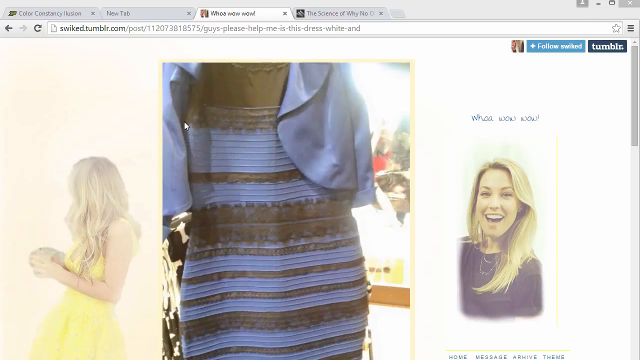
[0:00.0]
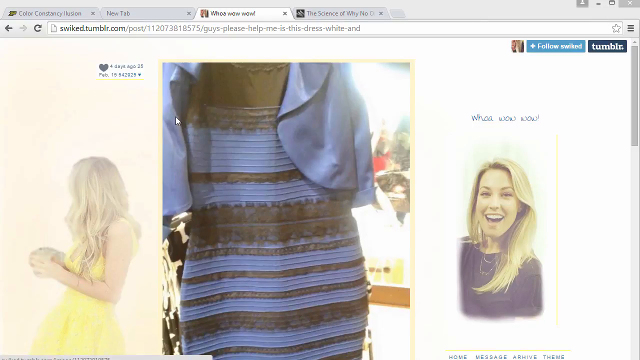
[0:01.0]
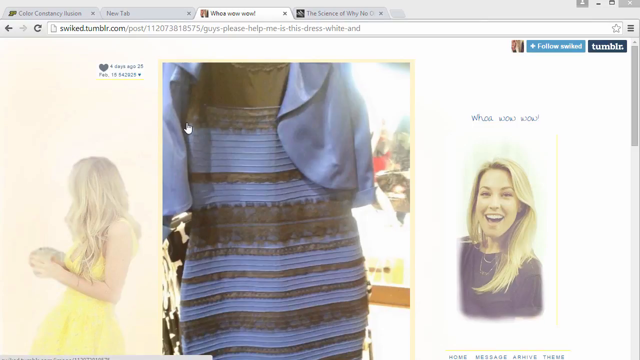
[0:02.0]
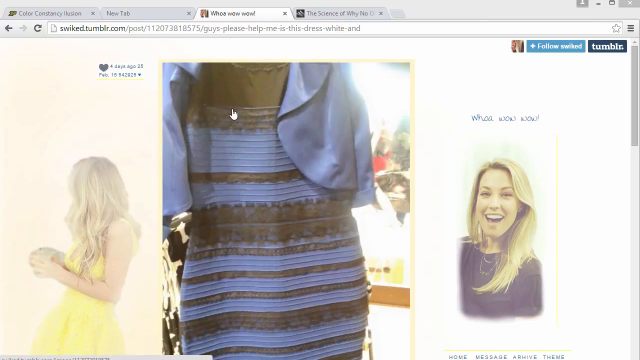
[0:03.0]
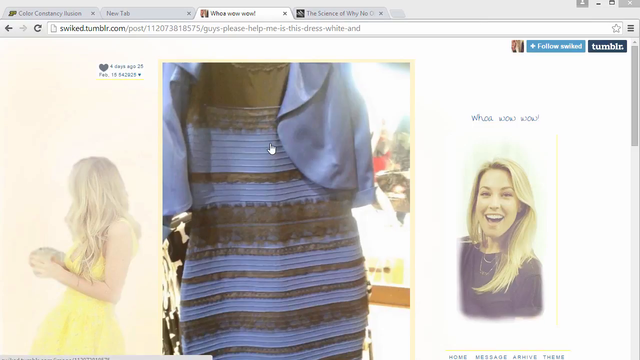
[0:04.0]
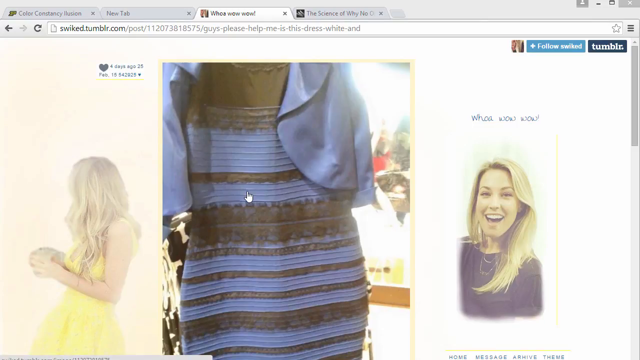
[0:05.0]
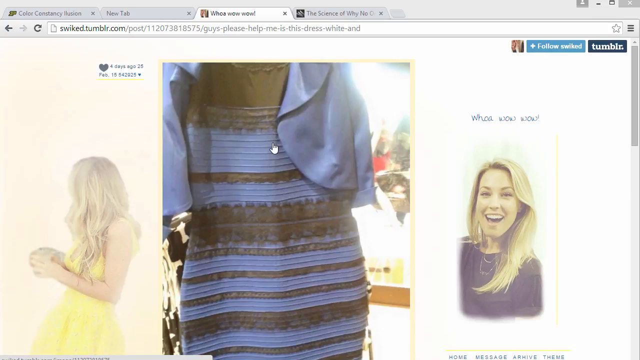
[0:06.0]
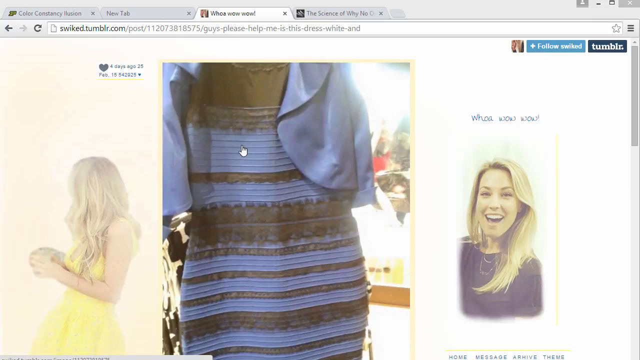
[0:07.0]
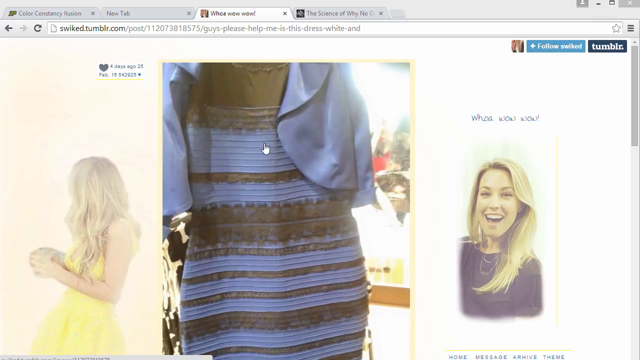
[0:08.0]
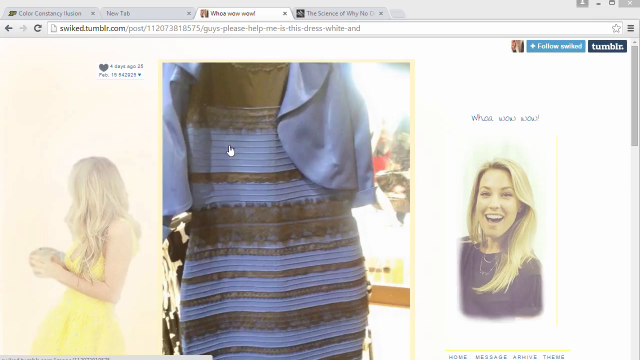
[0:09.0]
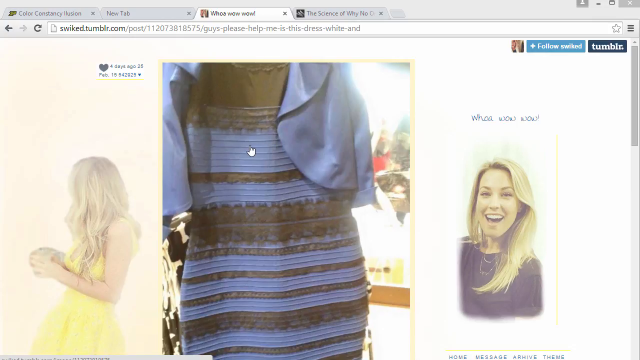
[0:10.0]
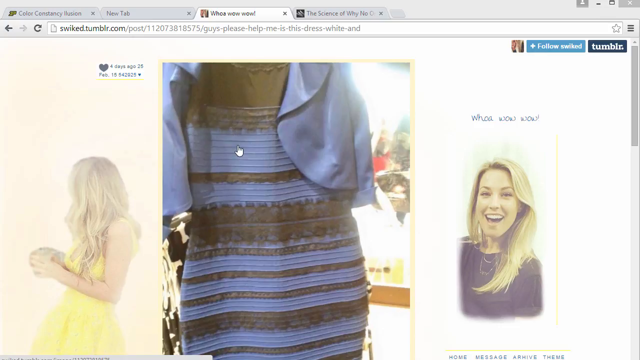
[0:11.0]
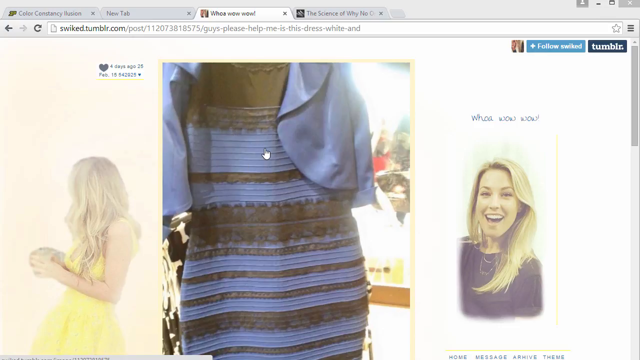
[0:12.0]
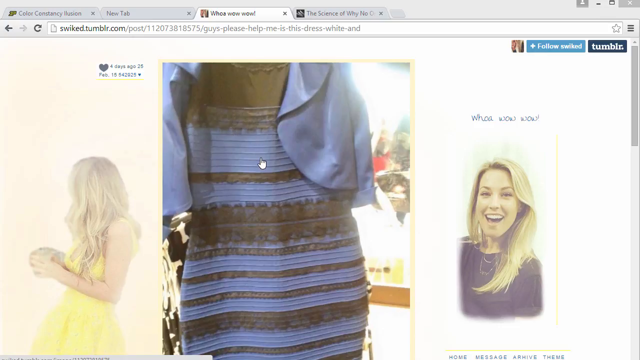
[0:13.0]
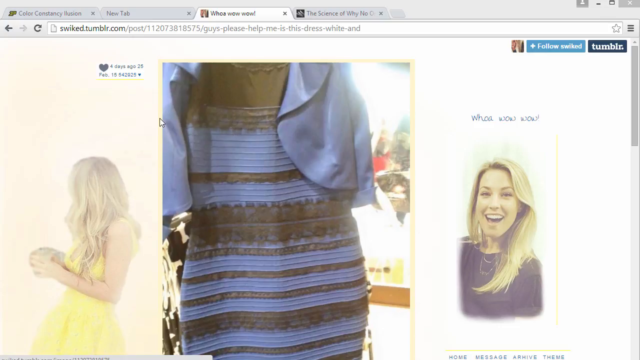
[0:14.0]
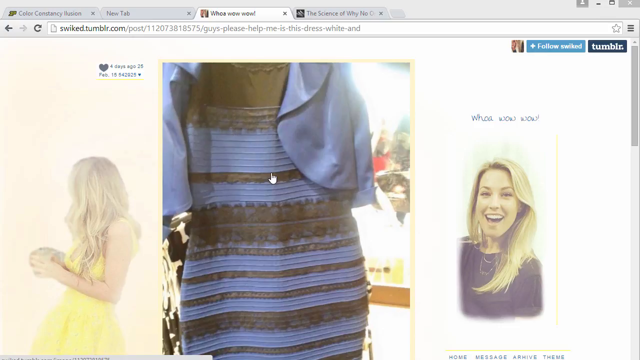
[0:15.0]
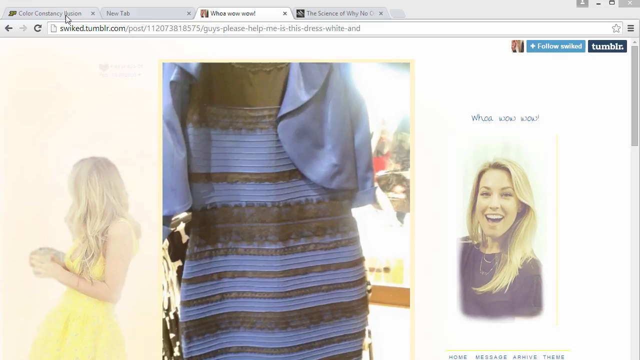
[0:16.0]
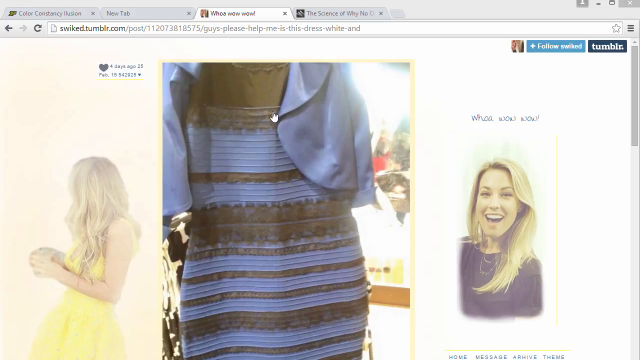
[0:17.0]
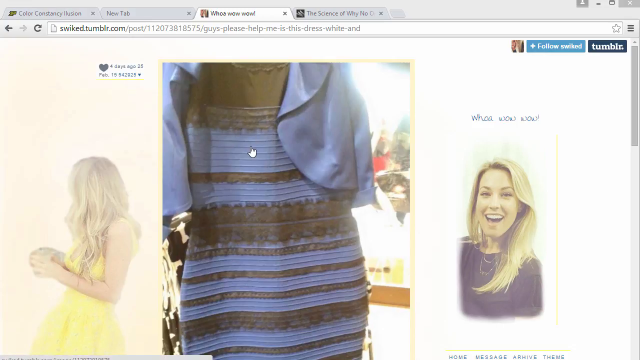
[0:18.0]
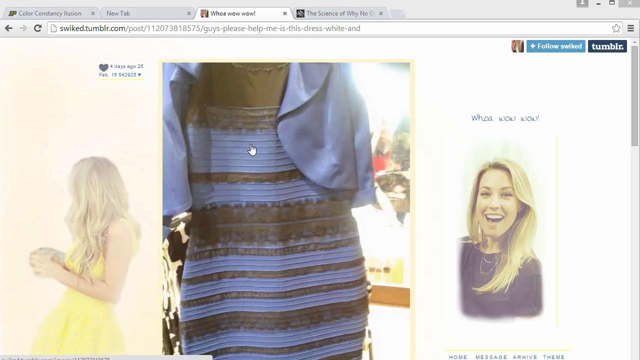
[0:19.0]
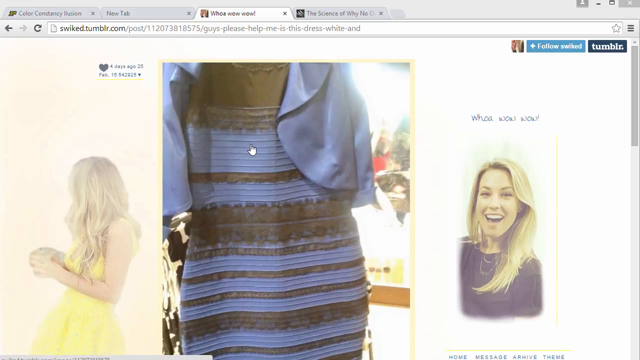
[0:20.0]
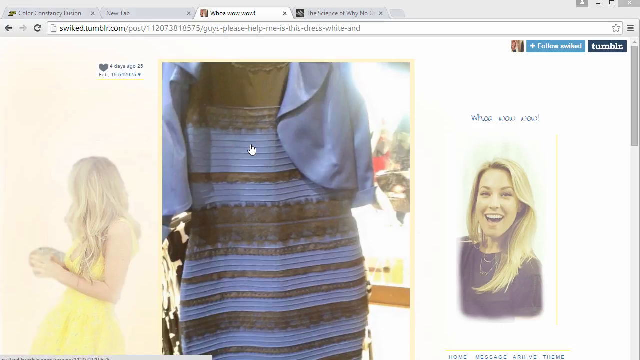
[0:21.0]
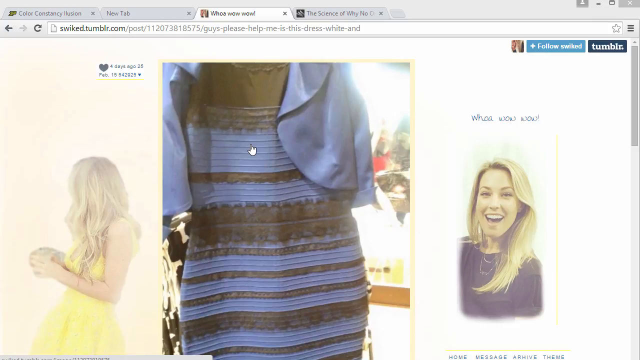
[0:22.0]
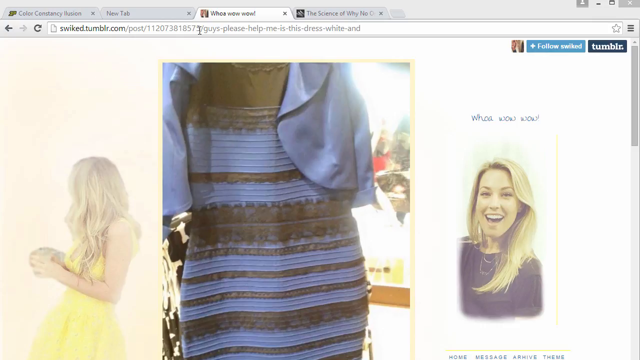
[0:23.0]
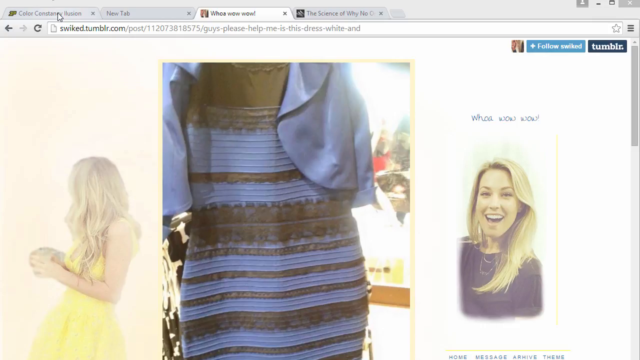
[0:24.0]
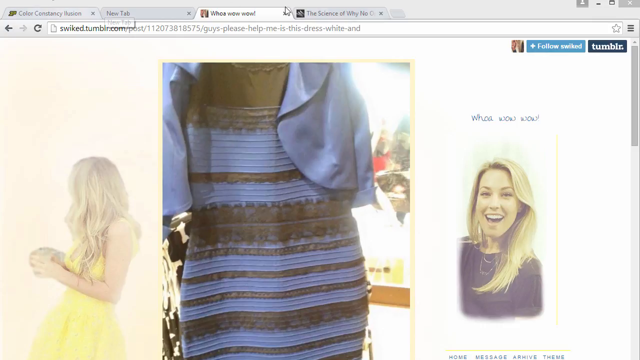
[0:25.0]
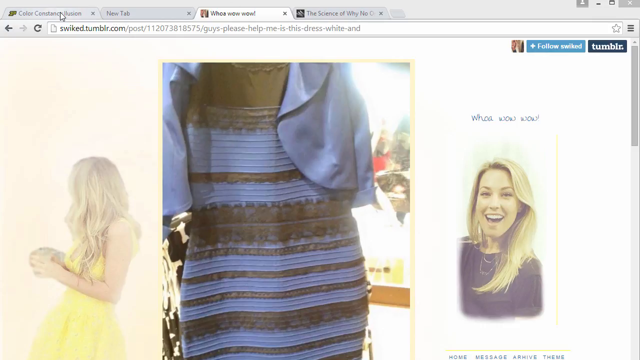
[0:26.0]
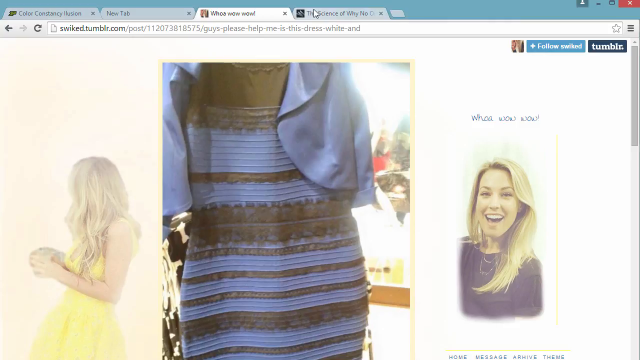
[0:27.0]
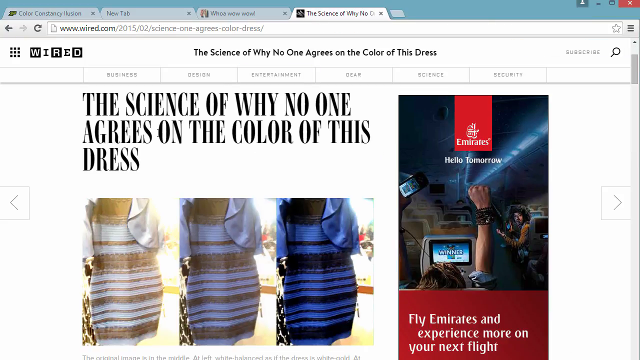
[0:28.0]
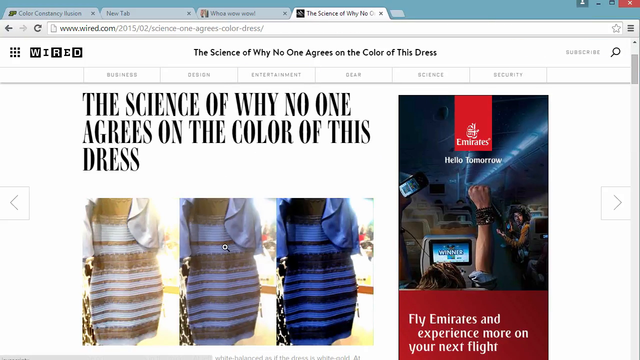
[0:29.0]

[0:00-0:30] A web browser is open with four tabs. The first goes to a color constancy illusion, the second is a new tab, the focused third tab is "whoa, wow, wow", and the fourth says "the science of why no", with more words that do not fit. The browser is grayscale apart from the websites' favicons. The page appears to be the Tumblr page for "whoa, wow, wow". Both sides of the background show an image of a blonde woman. On the left she looks away, wears a yellow dress and is possibly folding something; her blonde hair reaches elbow length. On the other side she looks at the camera and smiles with her mouth open, her top teeth visible and her bottom teeth not; she wears a black shirt and a couple of necklaces, and her straightened hair goes down past her shoulders. Above her it says "whoa, wow, wow". In the middle is the dress, which looks blue and black, though some may see it as white and gold. The cursor moves around and circles areas of the dress, such as the middle, where it is lightened by a different reflection of light. Over the dress the cursor becomes a select cursor shaped like a hand with the thumb and index finger up. On the picture a heart at the top left corner shows "four days ago" and "25th of February", with 542,000 hearts. The mouse goes back and forth between the tab area and the dress, moves to the browser bar and selects parts of it, then goes to the fourth tab.